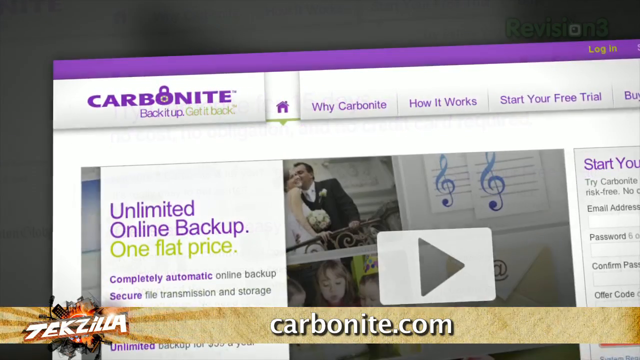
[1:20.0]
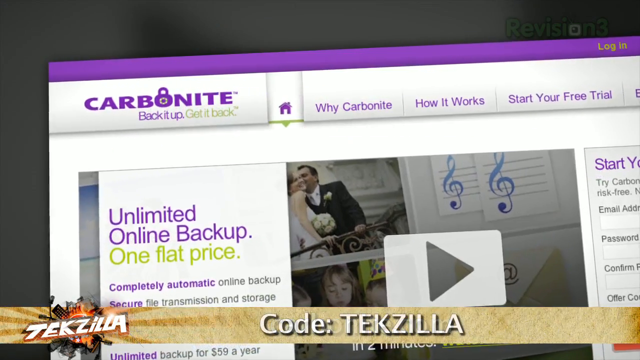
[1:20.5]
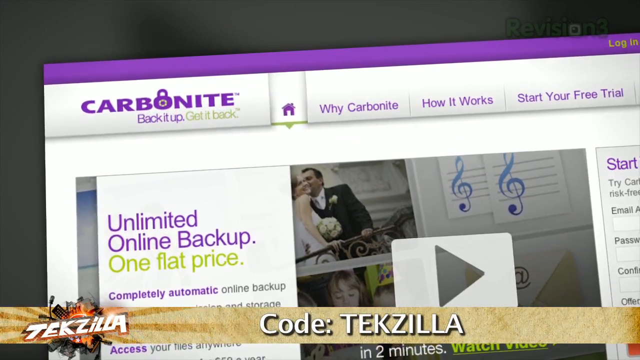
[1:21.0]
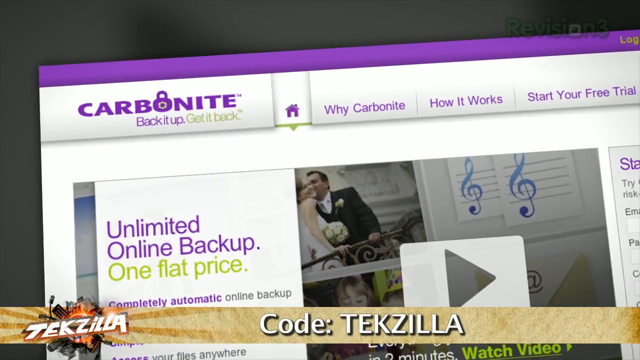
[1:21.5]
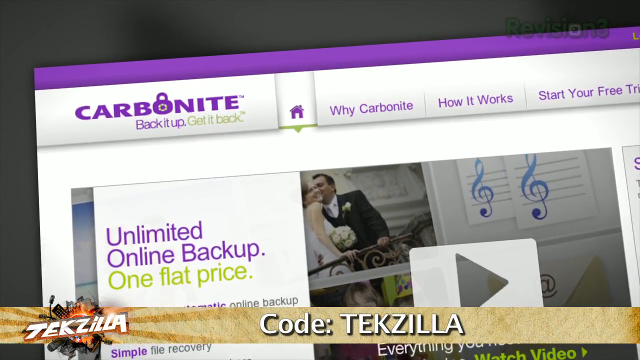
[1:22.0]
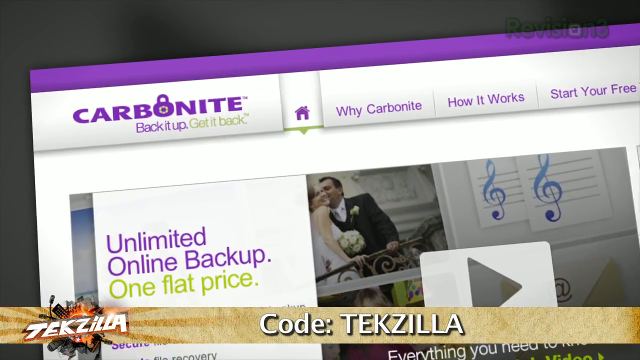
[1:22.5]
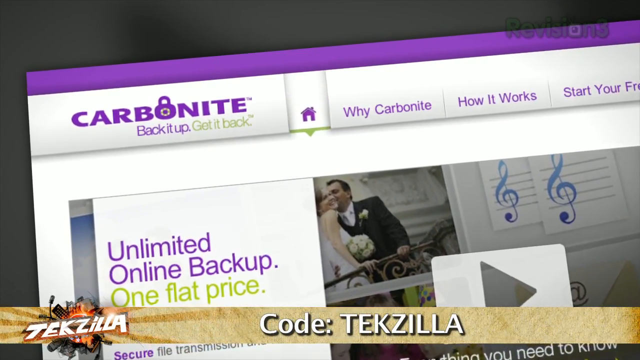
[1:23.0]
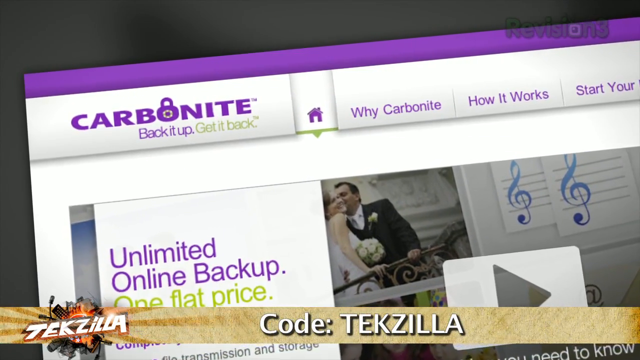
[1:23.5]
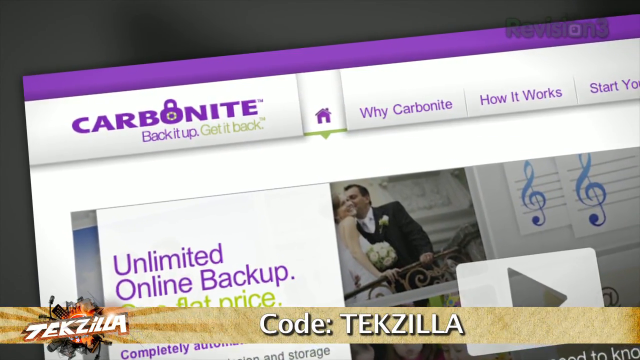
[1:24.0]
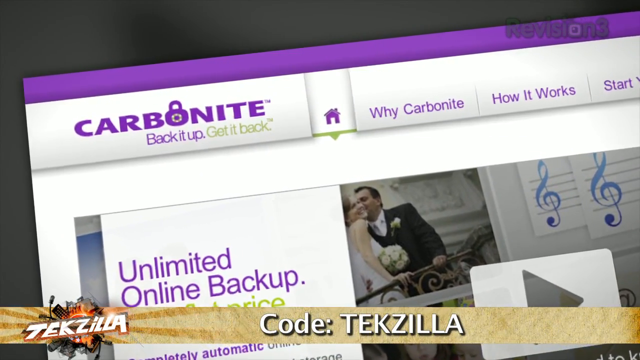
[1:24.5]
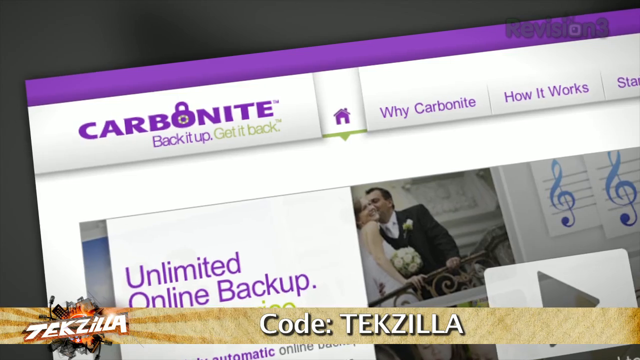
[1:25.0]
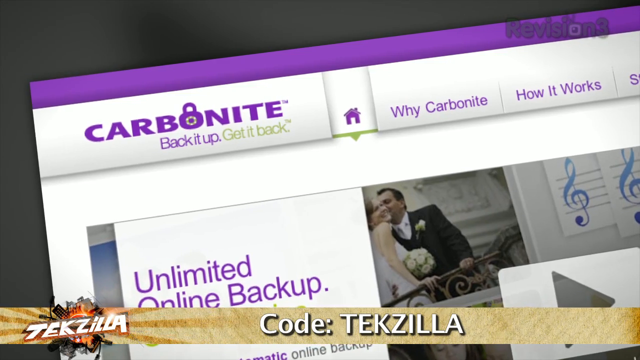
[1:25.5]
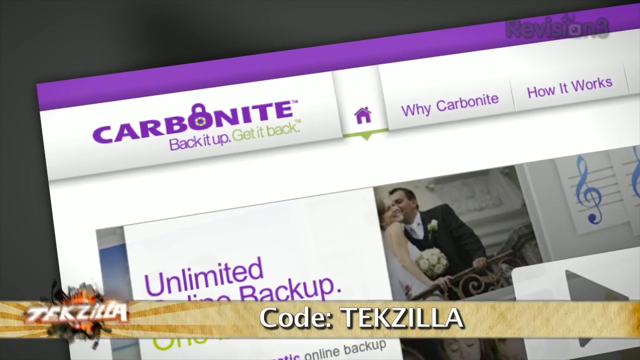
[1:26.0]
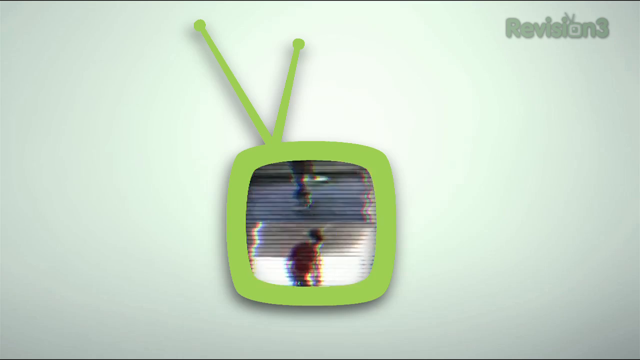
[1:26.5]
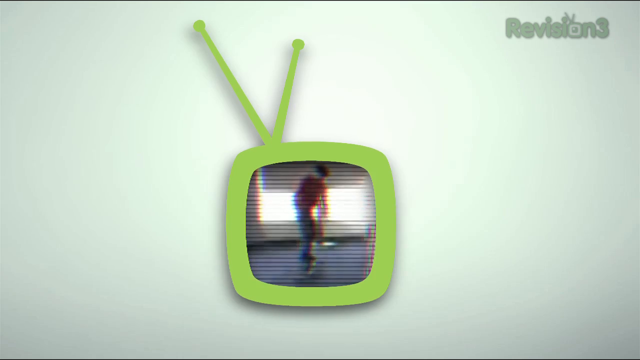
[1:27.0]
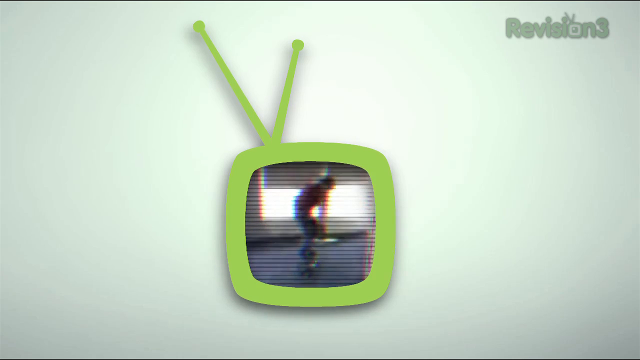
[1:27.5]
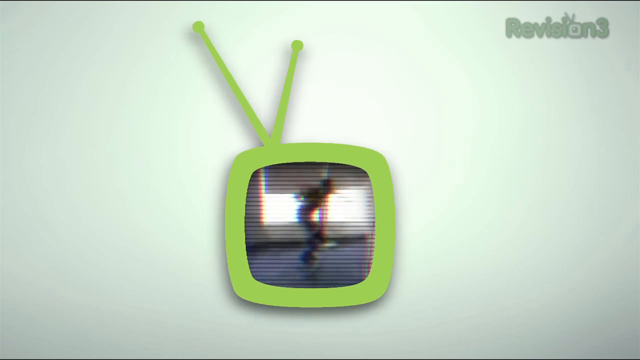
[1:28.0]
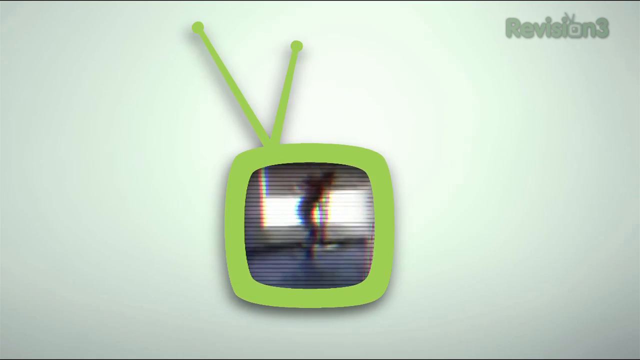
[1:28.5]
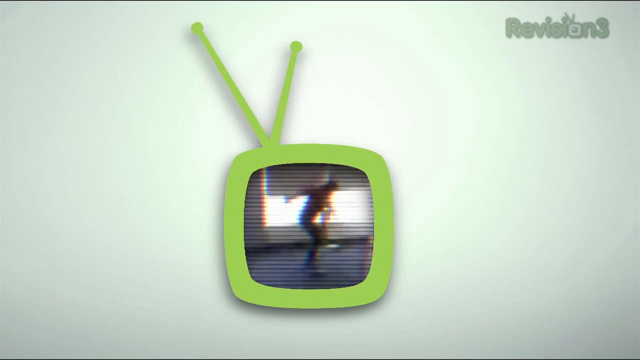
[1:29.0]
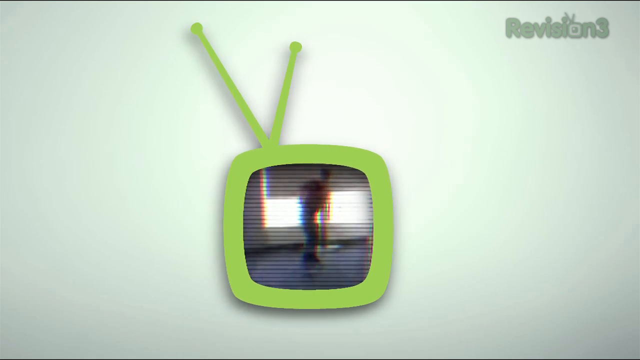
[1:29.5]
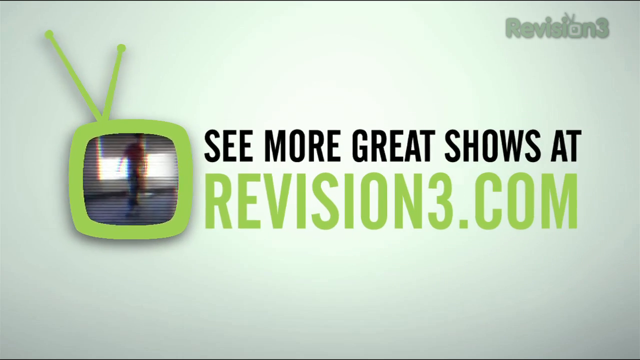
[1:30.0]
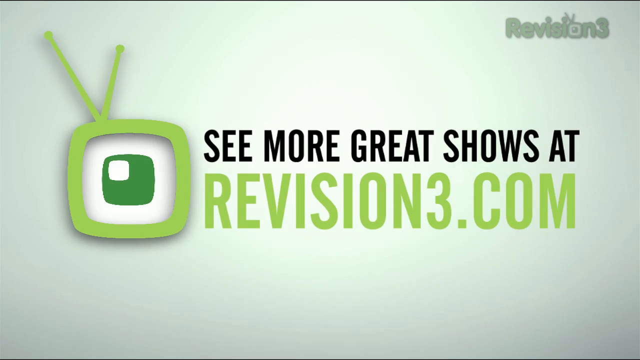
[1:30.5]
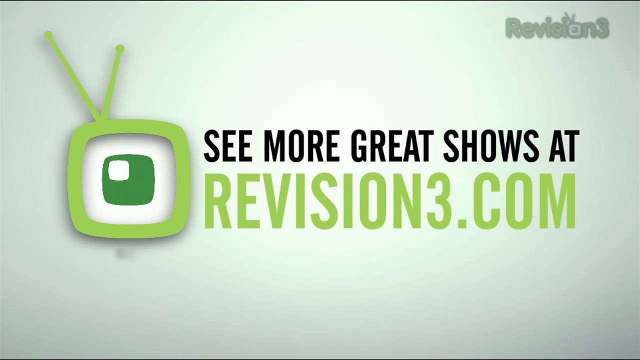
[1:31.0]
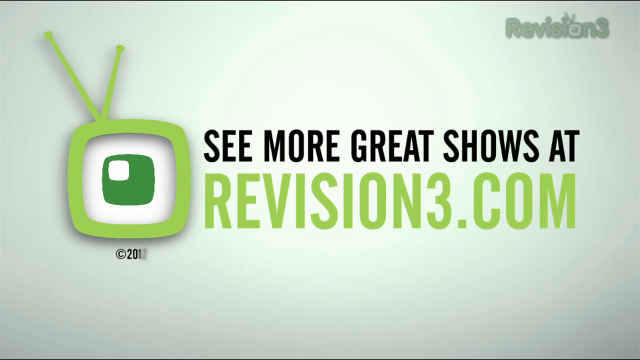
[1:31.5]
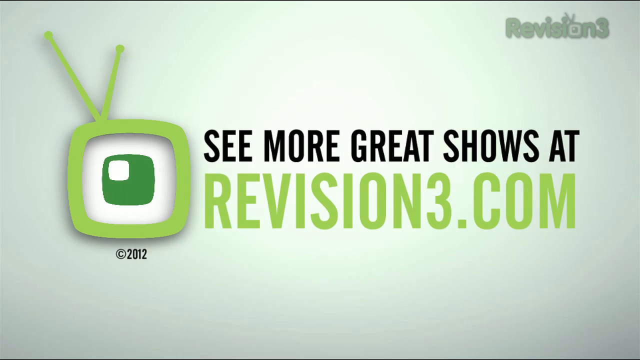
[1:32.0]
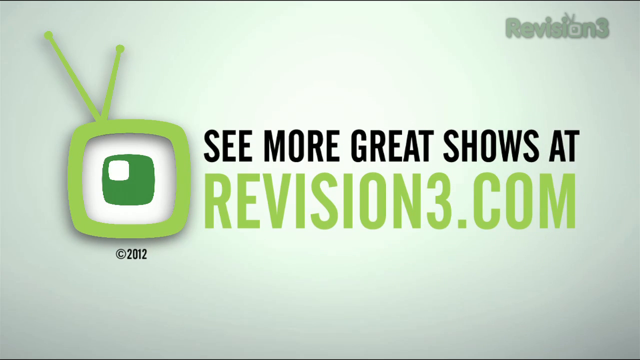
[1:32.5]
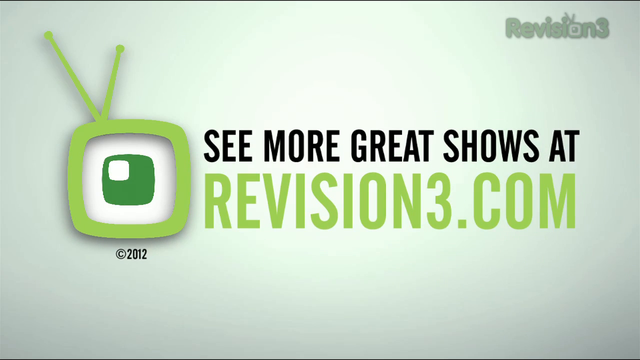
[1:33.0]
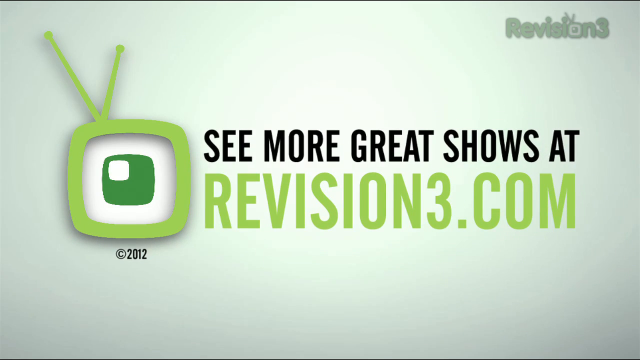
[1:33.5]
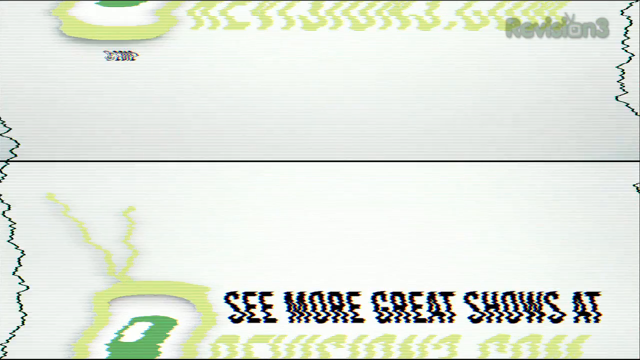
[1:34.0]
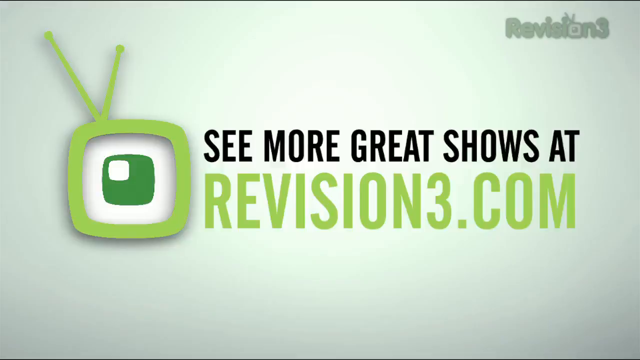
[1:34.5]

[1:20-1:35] An image of a Carbonite website shows the words "Unlimited Online Backup. One Flat Price." on its far left side. "Carbonite.com" and the Tekzilla logo appear at the bottom of the screen. The camera zooms in on the word "carbonite". The video then transitions to an off-white background, and in the center of the screen a green image of a television set with an antenna appears. Inside the television screen is video of an individual on a skateboard doing a kickflip, with a well-lit window behind him. The video then transitions to the words "See More Great Shows at Revision3.com": "See More Great Shows at" is written in black above "Revision3.com", which is slightly larger and in green. In the upper right-hand corner, "Revision3" is written in gray. Underneath the television set, now on the left side of the screen, "2012" is written in black.